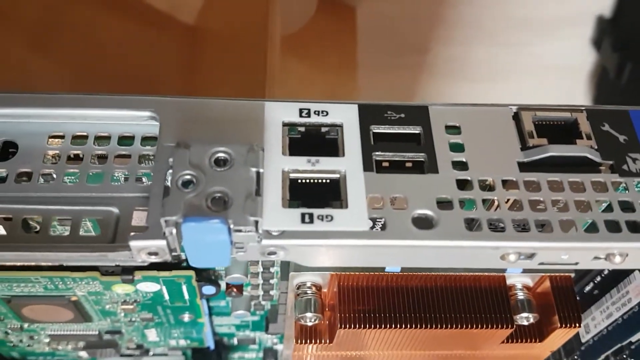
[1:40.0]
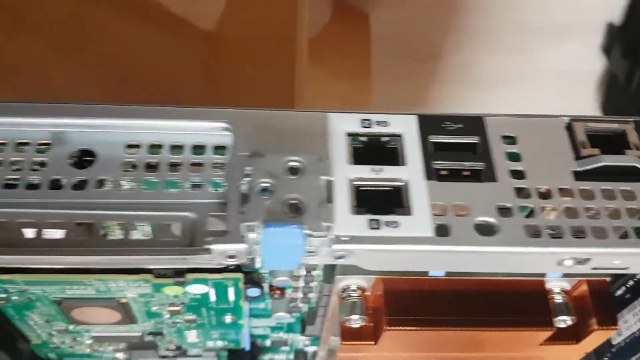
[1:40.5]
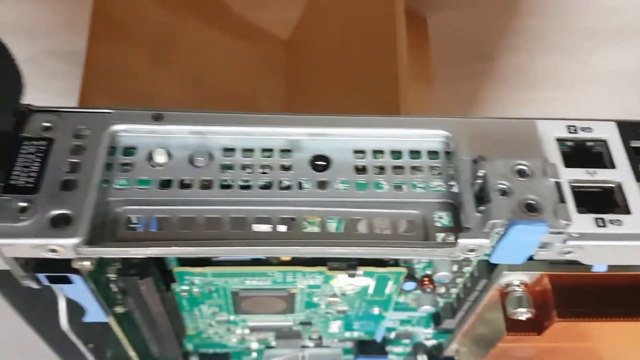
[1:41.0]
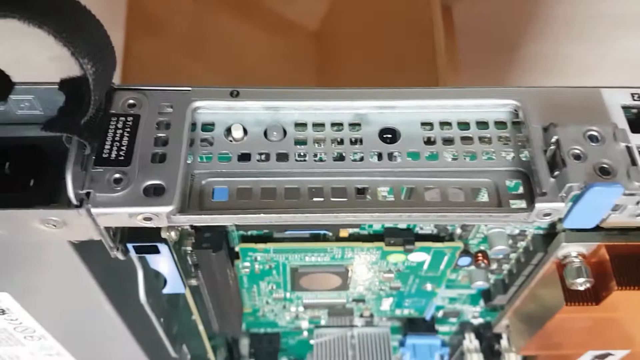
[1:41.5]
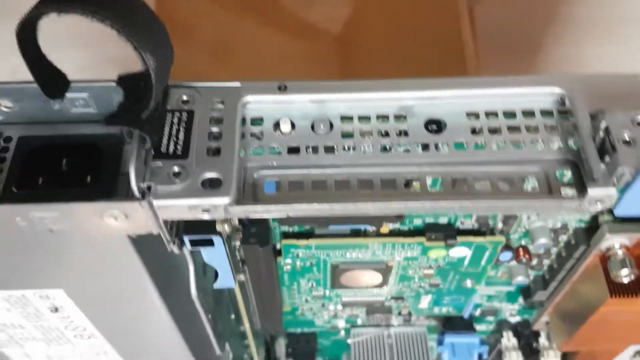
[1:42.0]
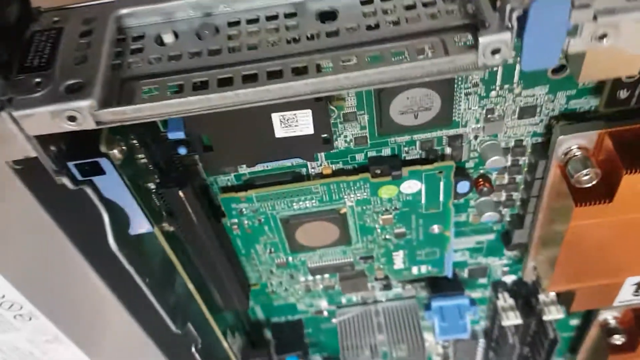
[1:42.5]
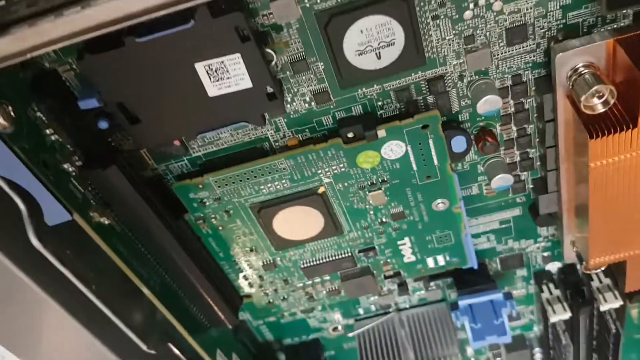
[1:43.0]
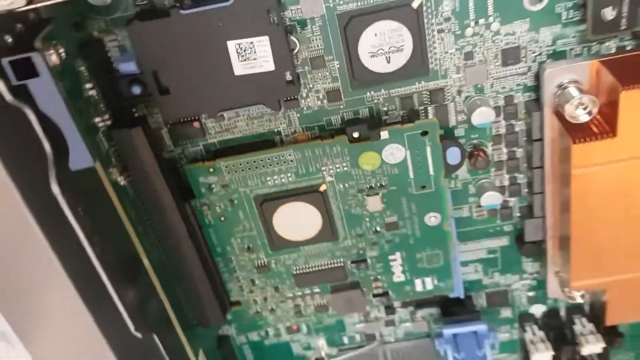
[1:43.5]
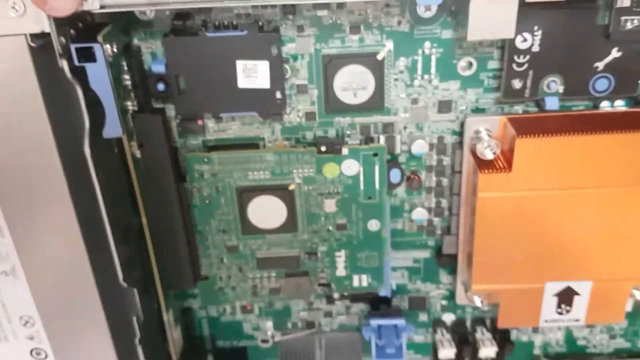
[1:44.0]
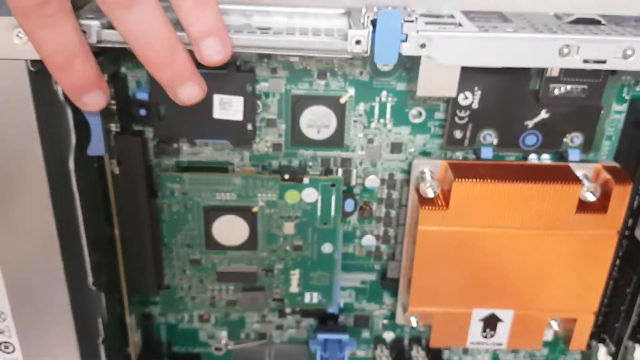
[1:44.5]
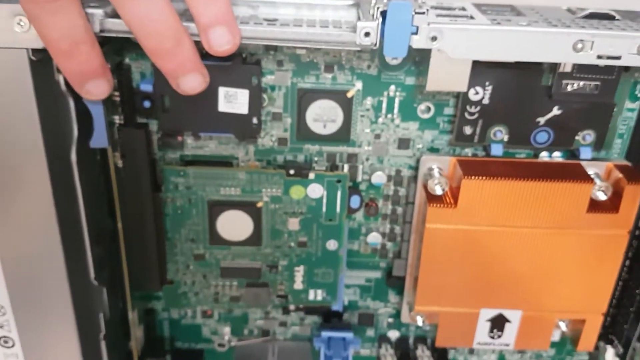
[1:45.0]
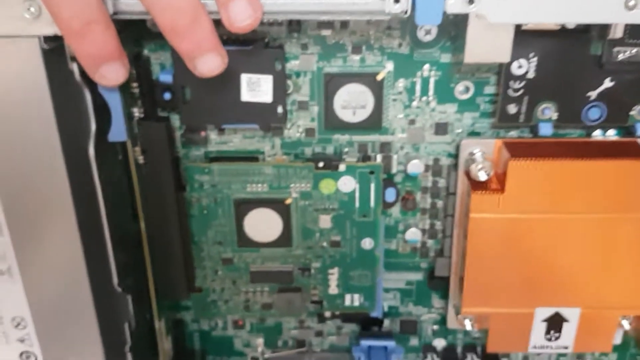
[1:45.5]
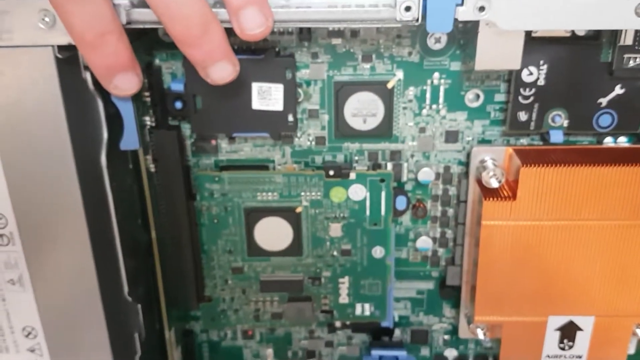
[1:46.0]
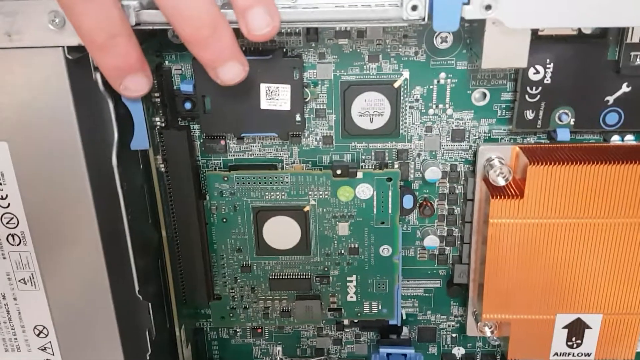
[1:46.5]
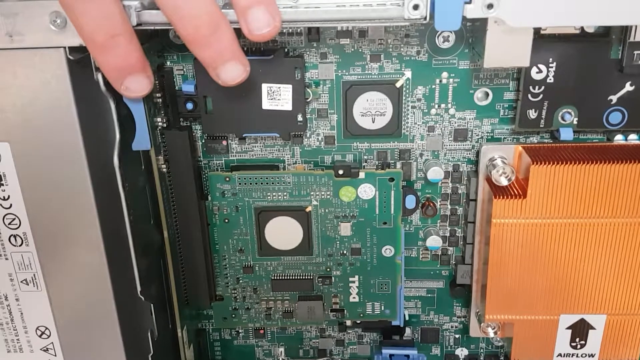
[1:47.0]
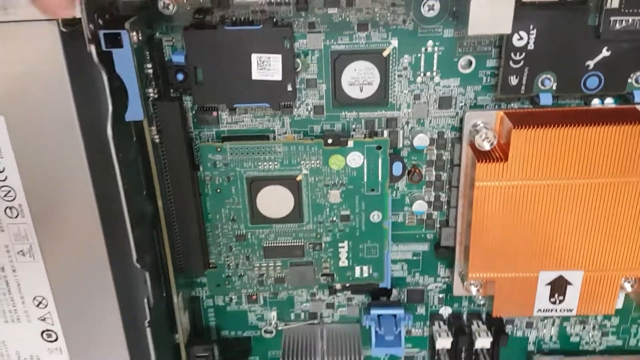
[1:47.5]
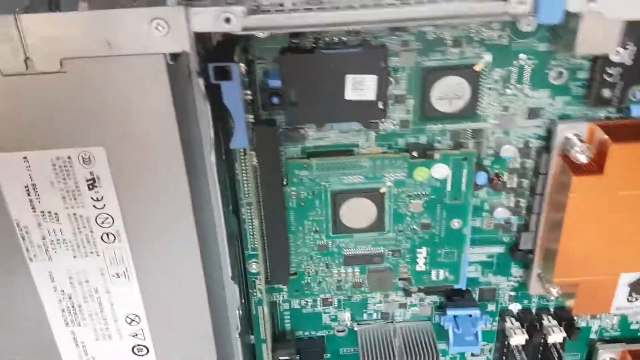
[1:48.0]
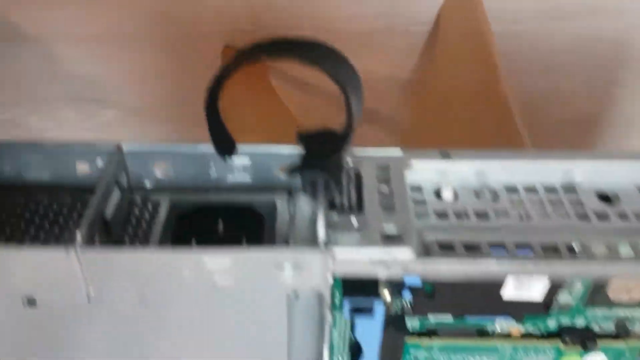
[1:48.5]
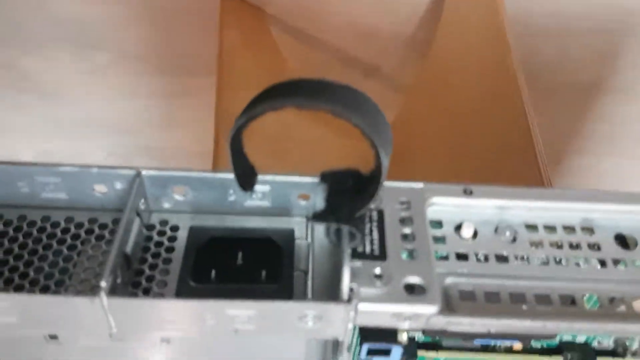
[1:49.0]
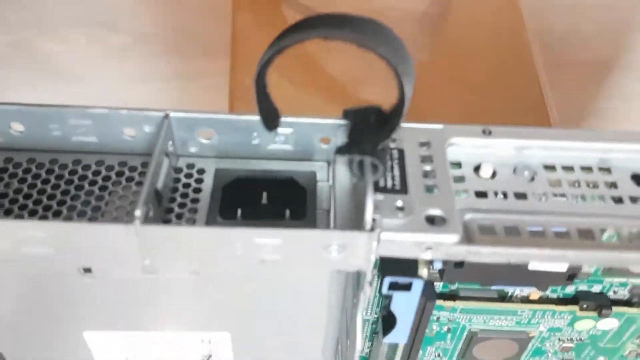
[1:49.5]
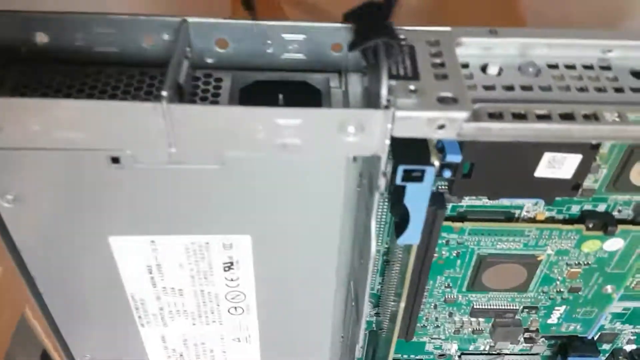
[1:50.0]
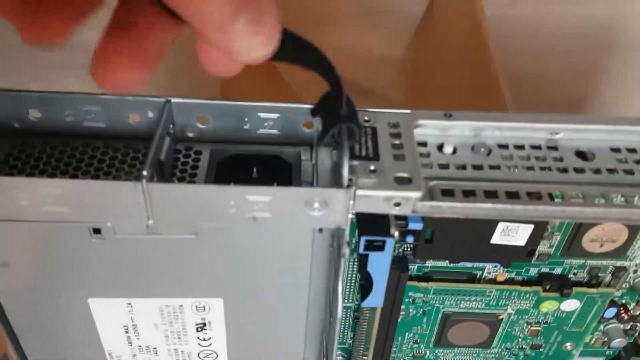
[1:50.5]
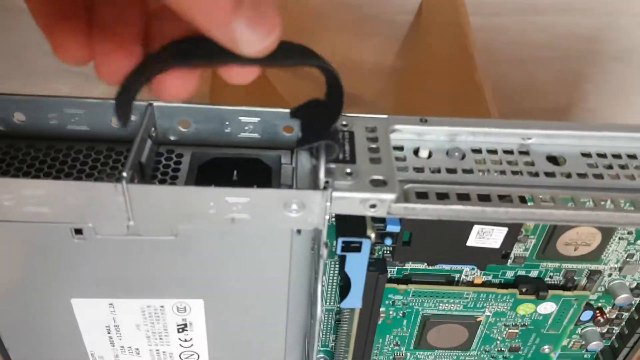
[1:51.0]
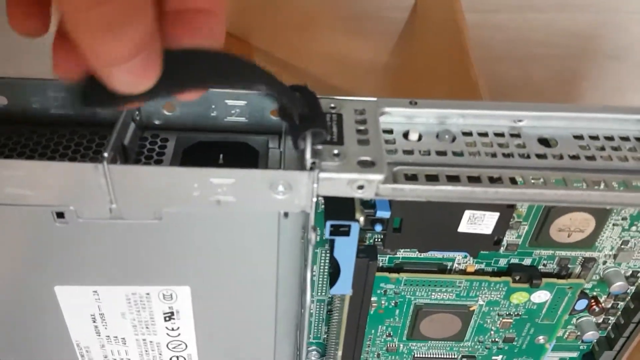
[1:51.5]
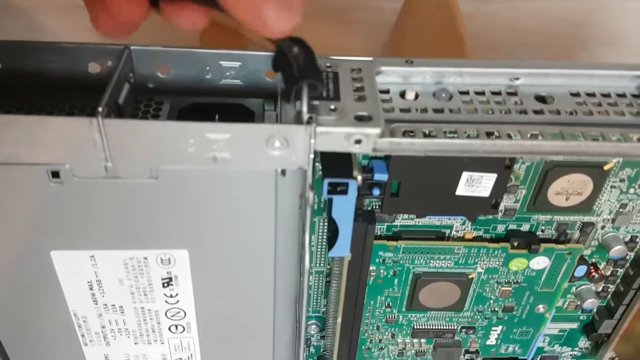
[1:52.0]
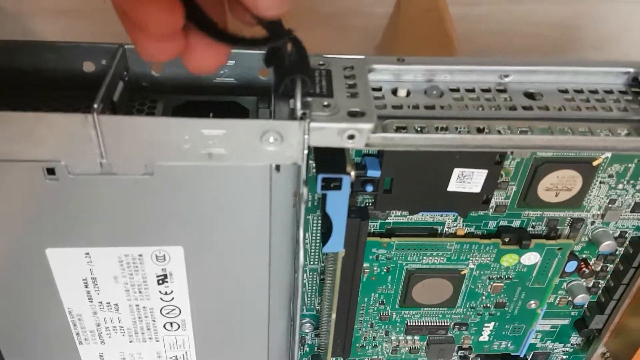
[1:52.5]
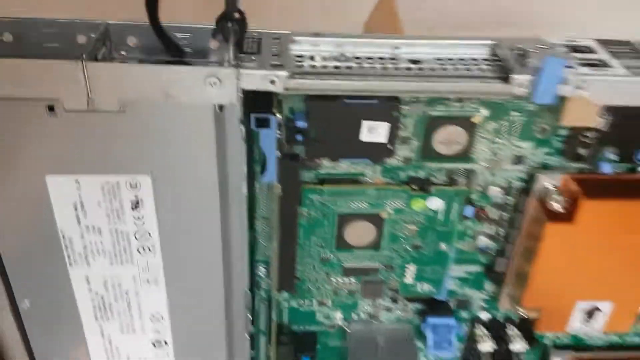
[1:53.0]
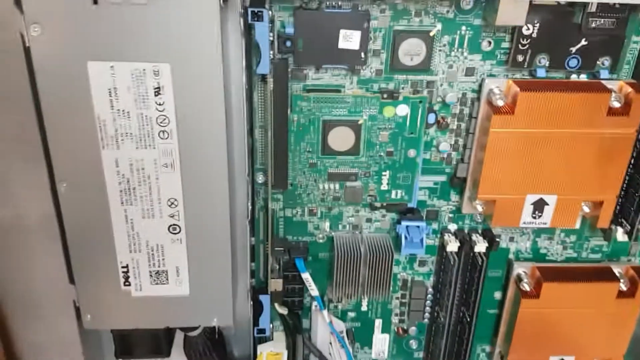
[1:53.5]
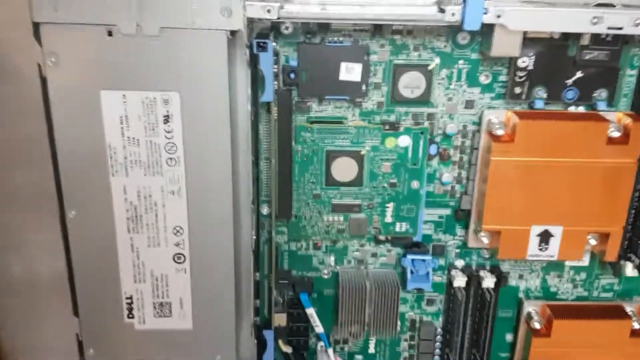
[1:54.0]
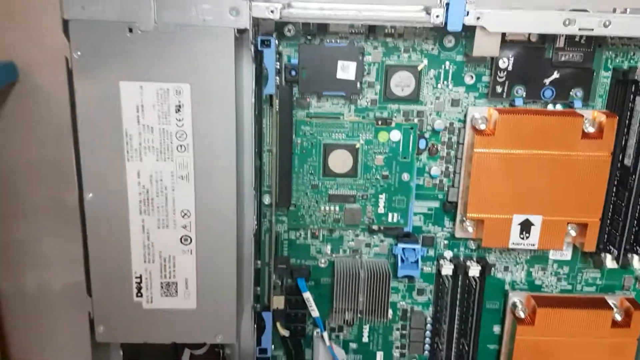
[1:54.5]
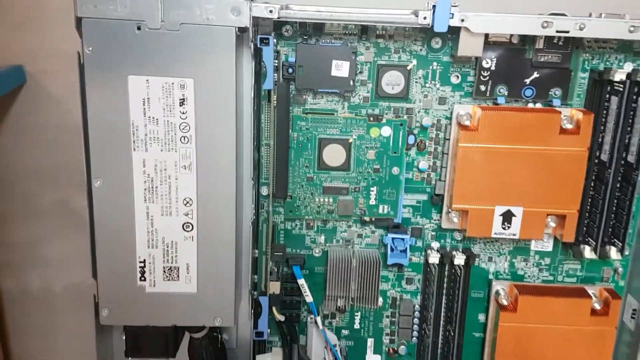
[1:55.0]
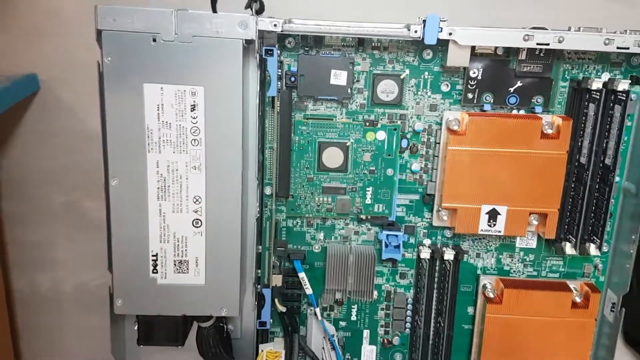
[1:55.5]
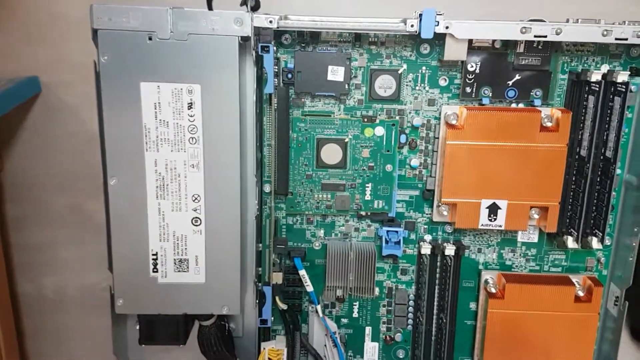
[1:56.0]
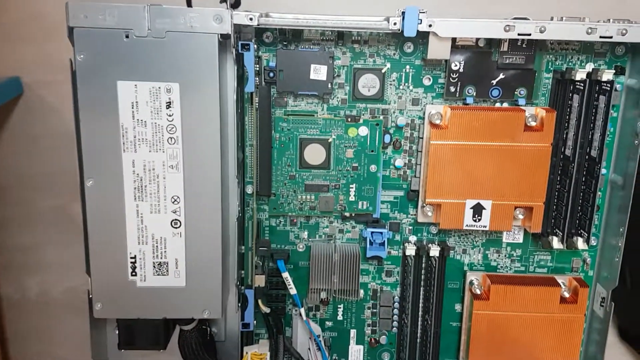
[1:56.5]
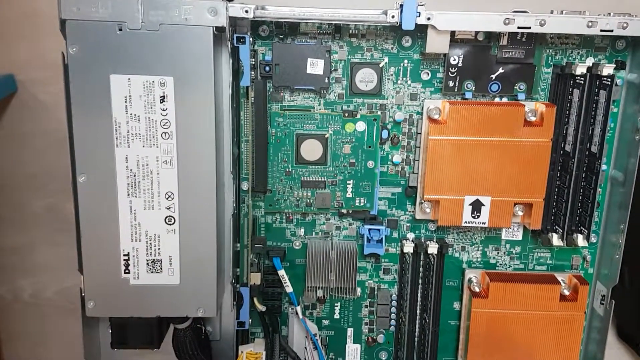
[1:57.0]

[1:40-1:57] The side of the server is examined, showing various holes that suggest air flow. Some of the Dell server's ports are visible, such as the Ethernet port and various video ports, along with a port for power, which is quite a bit bigger than the other ports. Next to the power cable is a piece of Velcro. The camera then briefly turns to the motherboard and the inside of the server; the motherboard is green, with components such as RAM, a processor and capacitors visible on it. His hand is sometimes visible, suggesting he may be demonstrating the object.